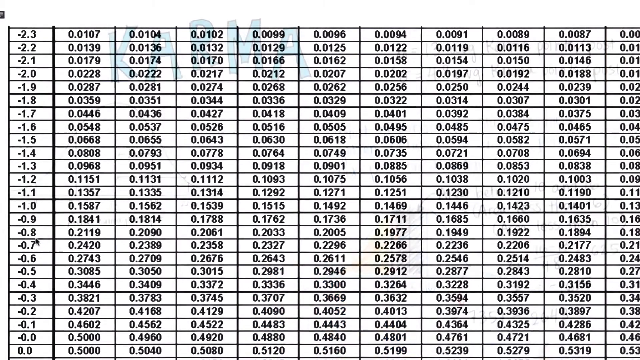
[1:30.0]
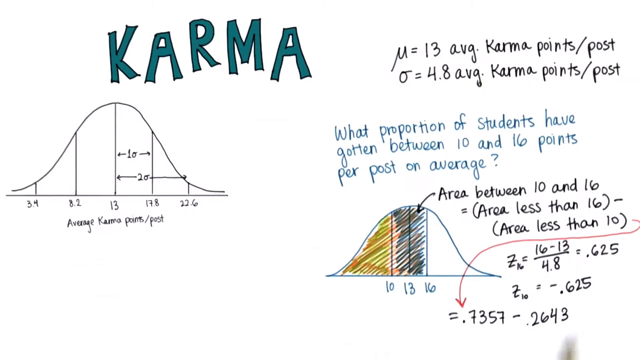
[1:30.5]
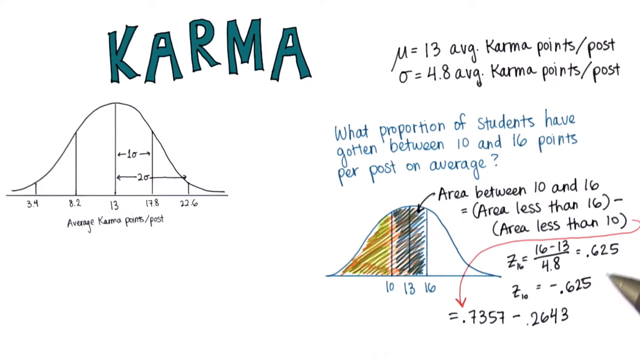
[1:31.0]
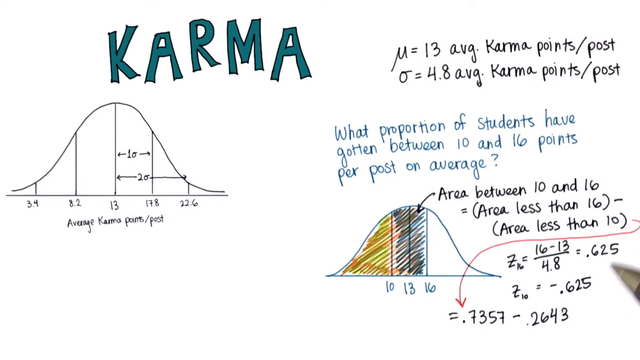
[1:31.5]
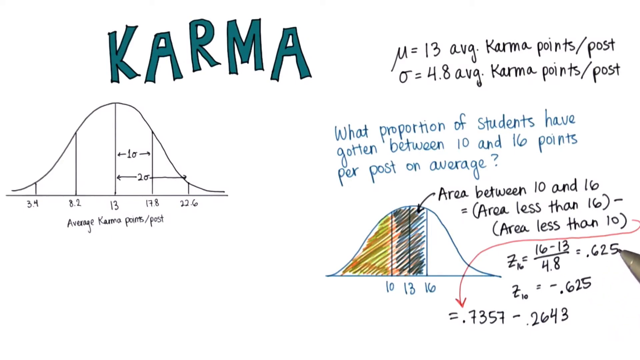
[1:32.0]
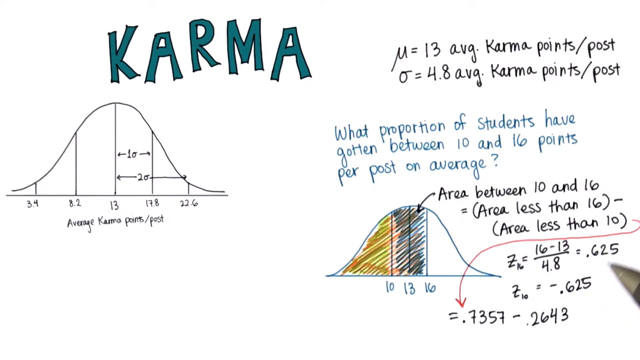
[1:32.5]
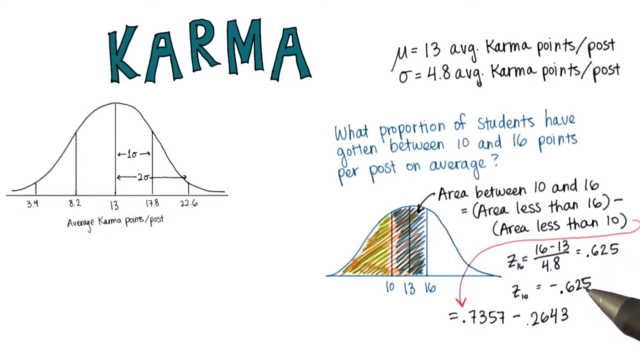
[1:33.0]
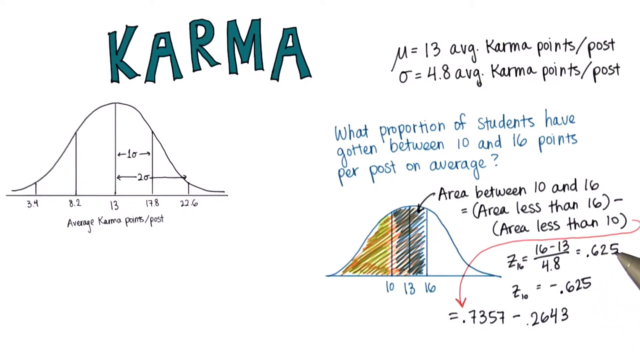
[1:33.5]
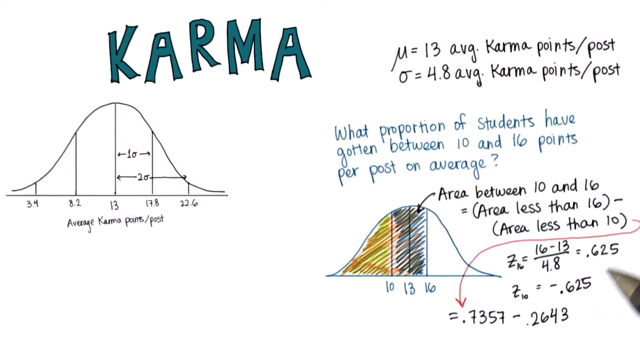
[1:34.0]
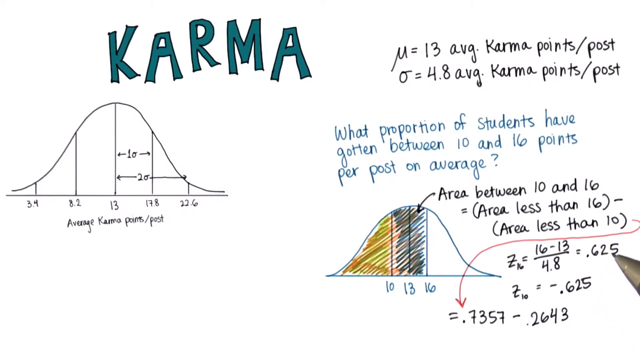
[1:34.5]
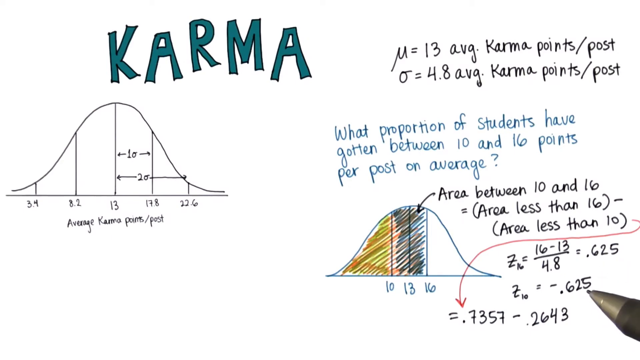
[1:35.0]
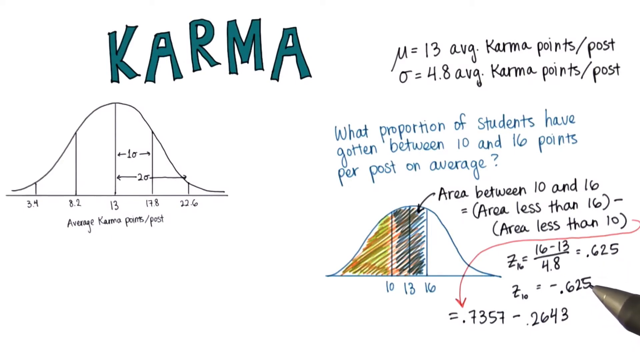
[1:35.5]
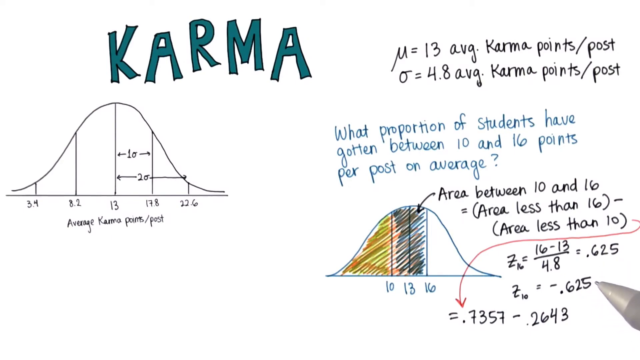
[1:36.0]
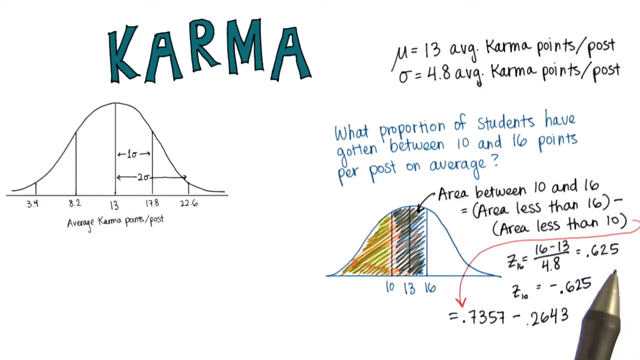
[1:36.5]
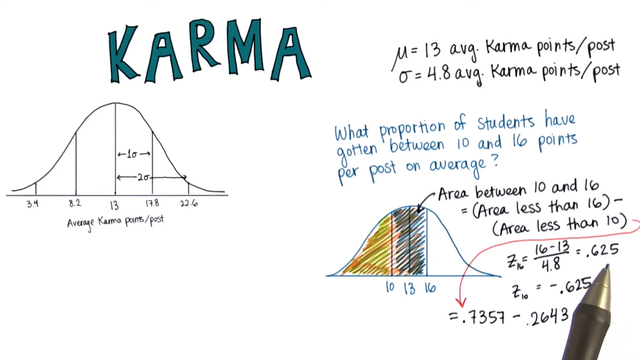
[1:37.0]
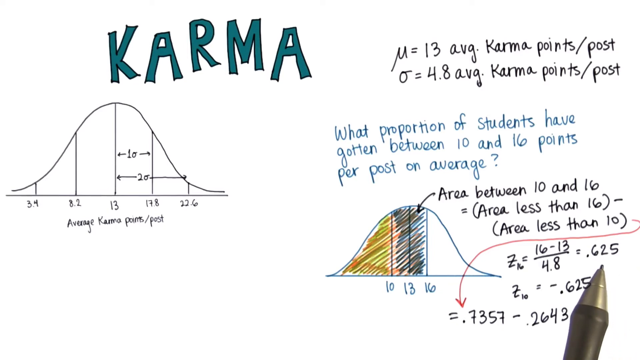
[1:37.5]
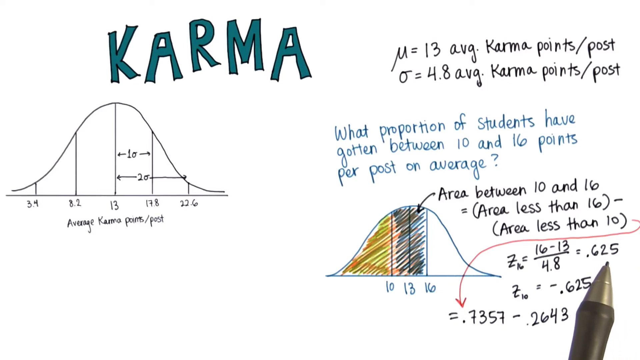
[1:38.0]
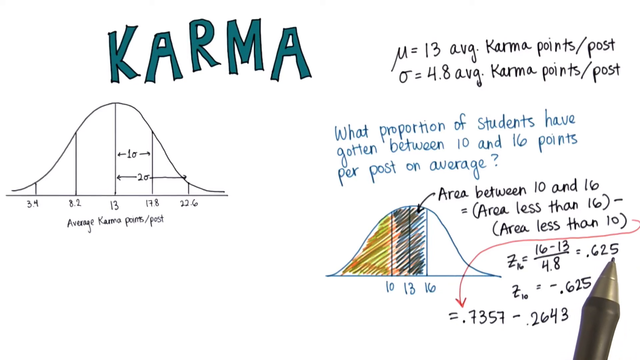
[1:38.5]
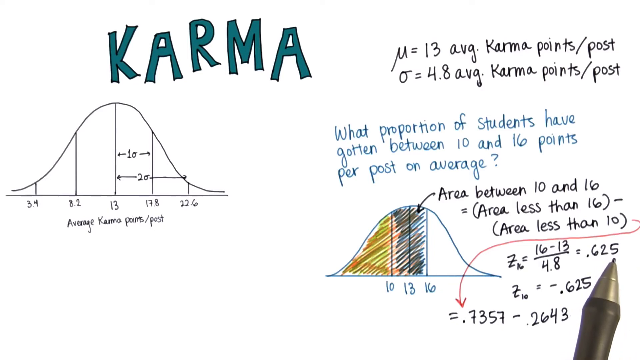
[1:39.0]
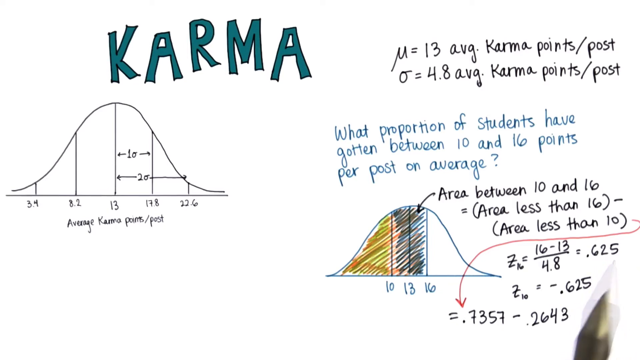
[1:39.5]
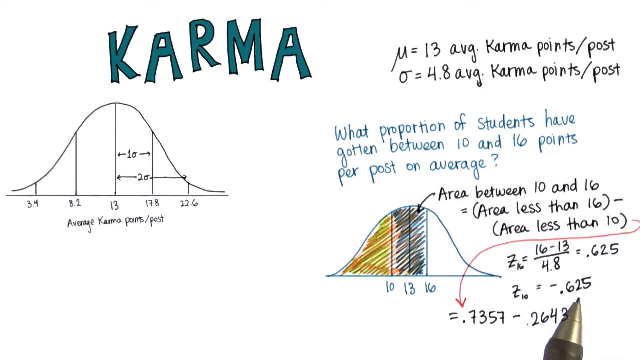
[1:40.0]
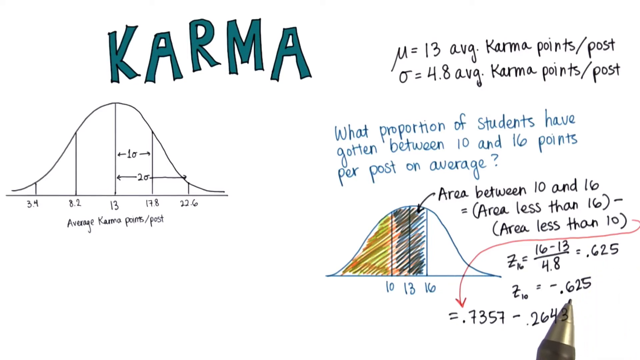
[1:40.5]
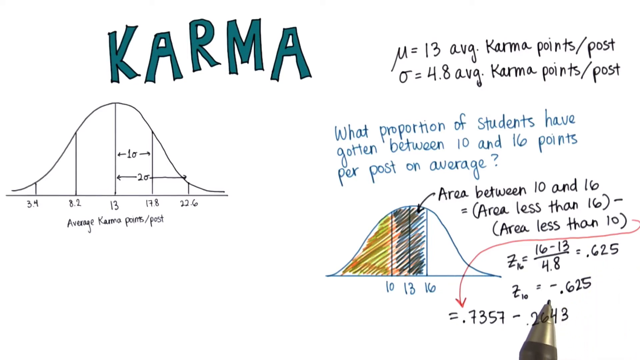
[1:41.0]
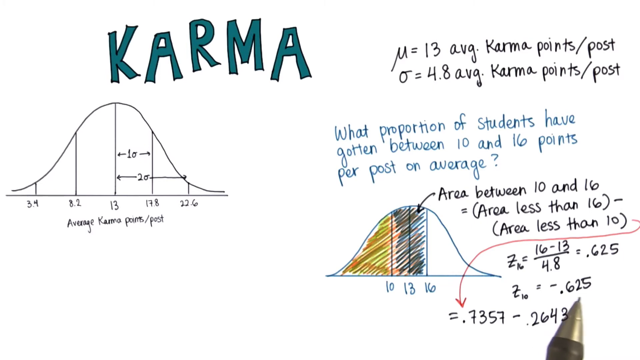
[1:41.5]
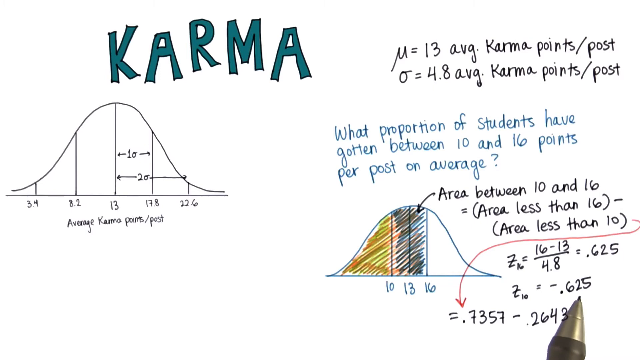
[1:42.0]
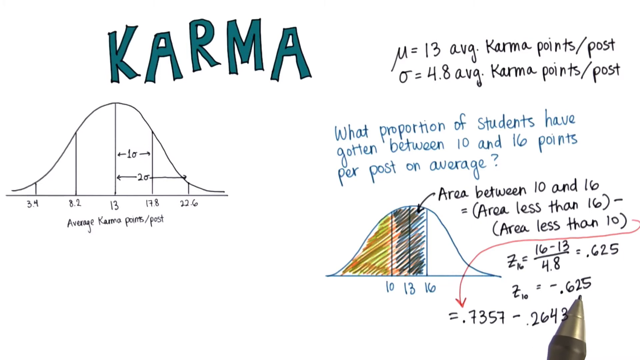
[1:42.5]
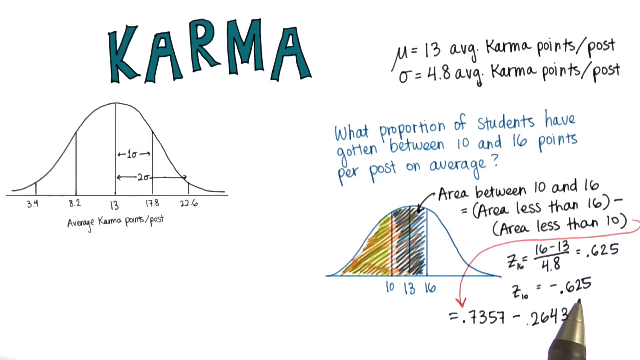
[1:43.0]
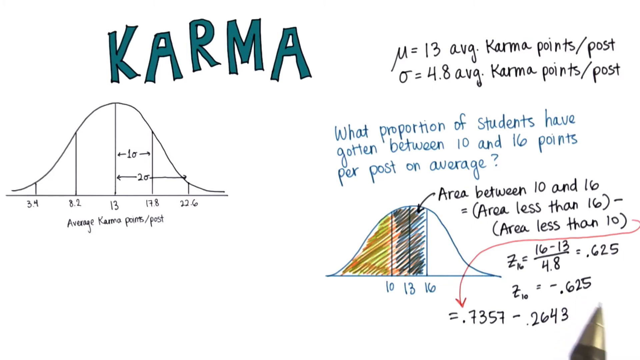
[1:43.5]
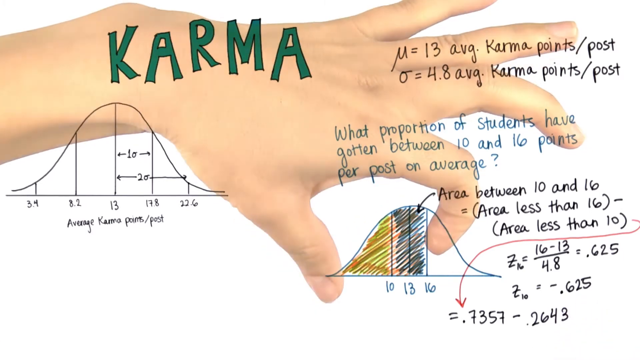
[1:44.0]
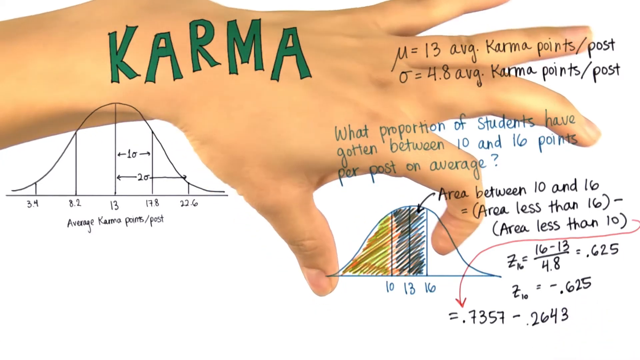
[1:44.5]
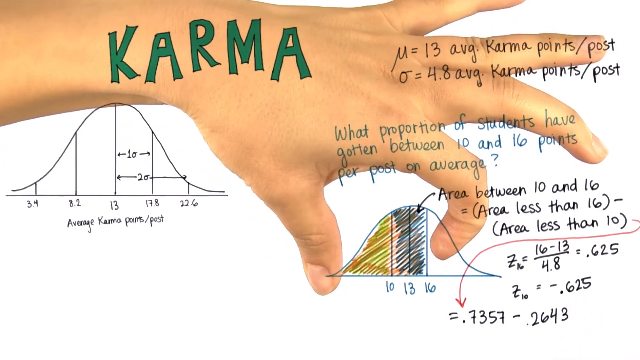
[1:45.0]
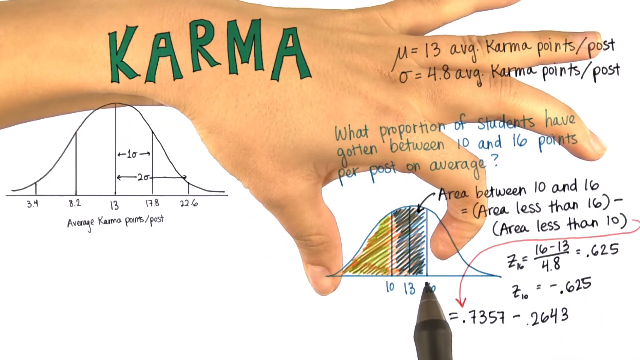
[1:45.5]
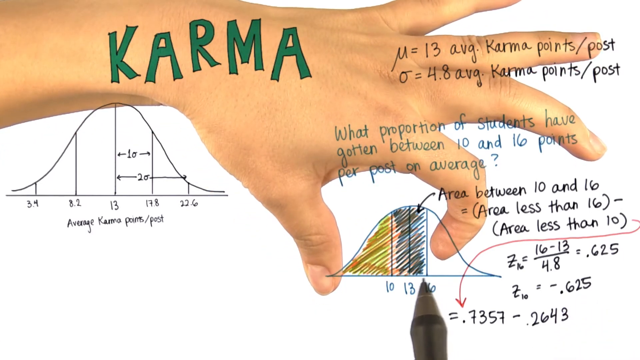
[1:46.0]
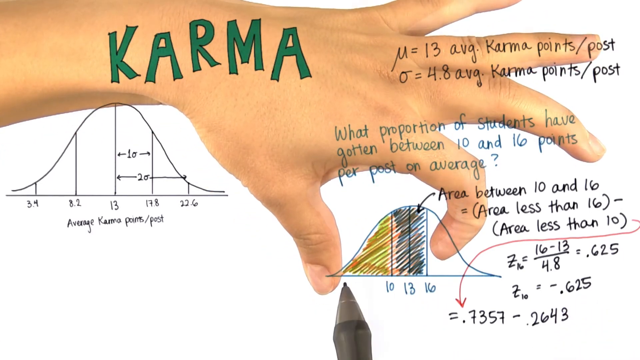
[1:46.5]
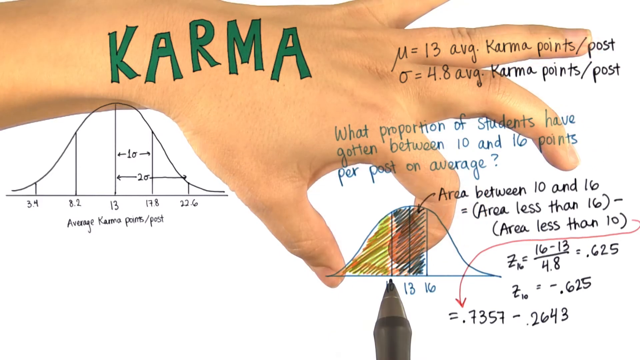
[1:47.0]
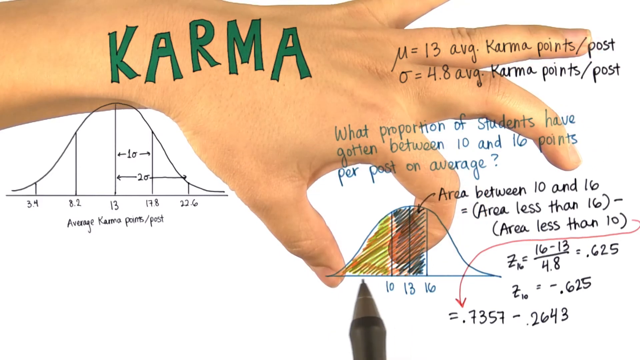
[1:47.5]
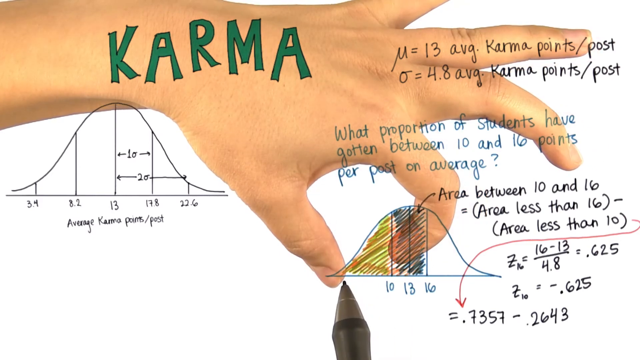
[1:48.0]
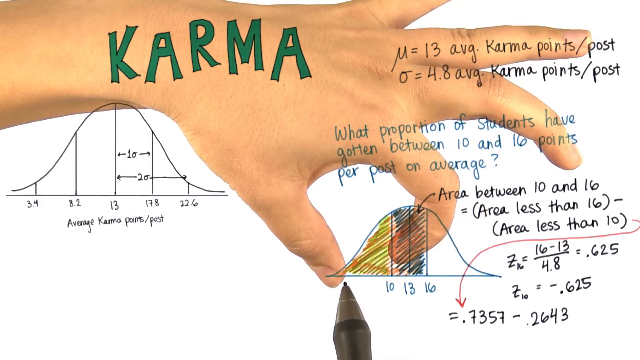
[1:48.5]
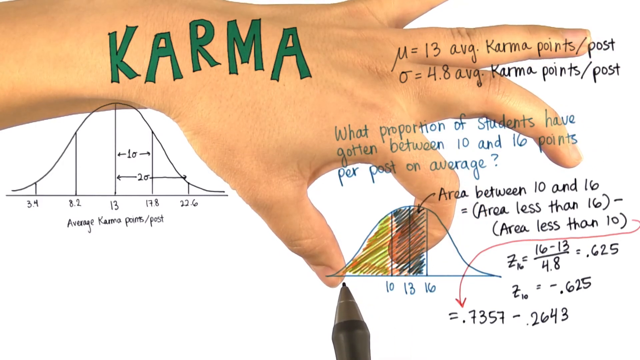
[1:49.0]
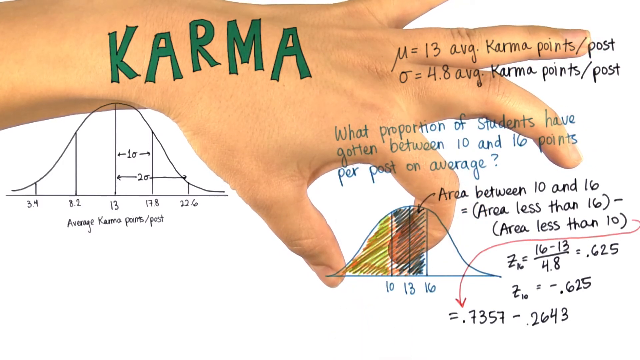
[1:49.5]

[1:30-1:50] A projection of a chart starts with negative 2.3 at the top left, with negative 0.0 at the bottom. The word karma is visible on the white background behind the projection, with some other faded writing to the right. The screen quickly changes to a white background with the word karma at the top left and a graph right underneath reading "average karma points post". On the right side, text reads "M equals 13 average karma points" and "O equals 4.8 average karma points", and a question reads "what portion of students have gotten between 10 and 16 points per post". Underneath is a graph that is half colored in. The author holds his pen and moves its point as a pointer between 0.625 and 0.625 in two different parts of the equation. He then holds his fingers up and uses his pen, apparently gauging the distance between his fingers to measure a distance on his chart.